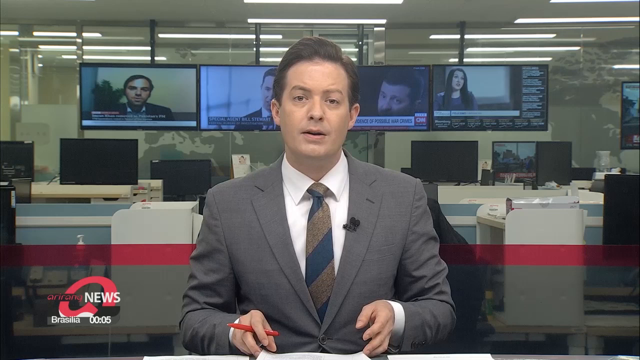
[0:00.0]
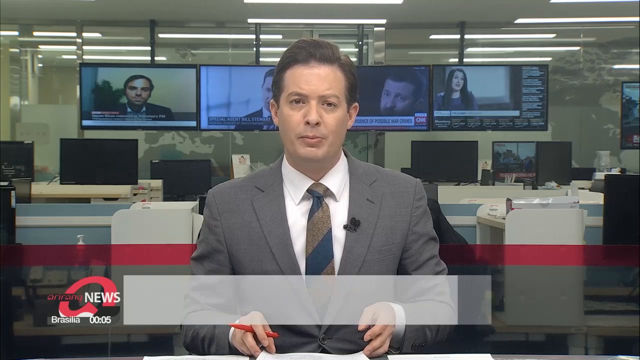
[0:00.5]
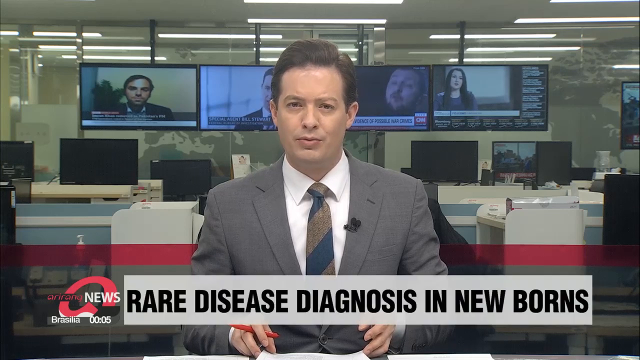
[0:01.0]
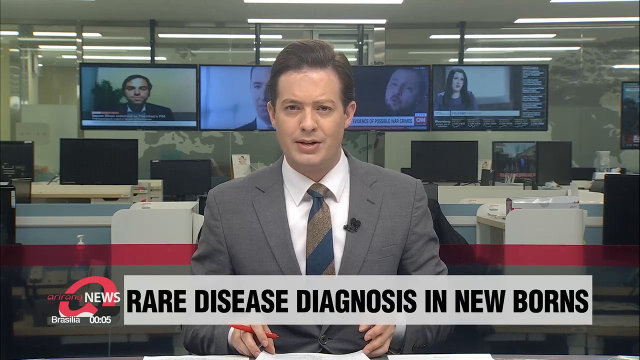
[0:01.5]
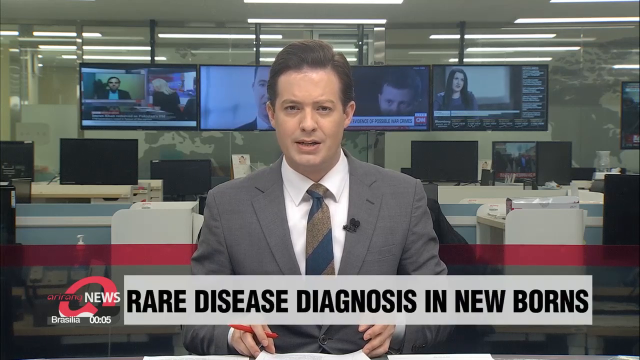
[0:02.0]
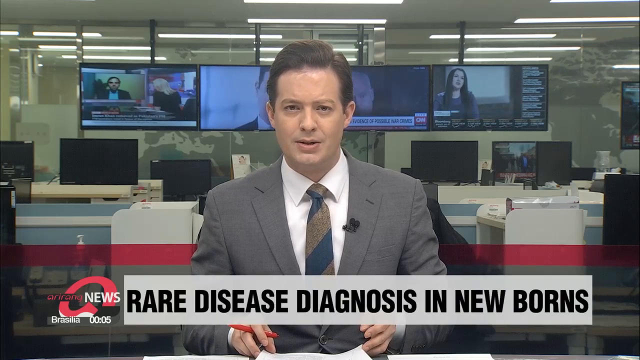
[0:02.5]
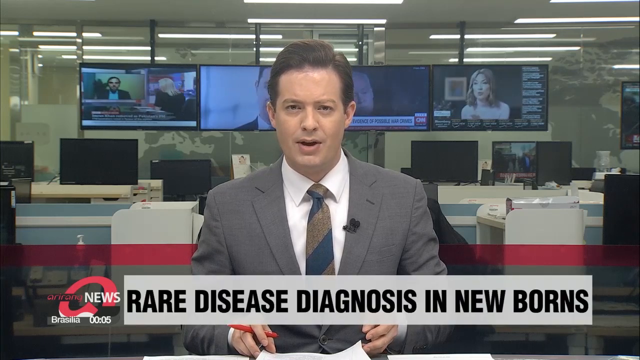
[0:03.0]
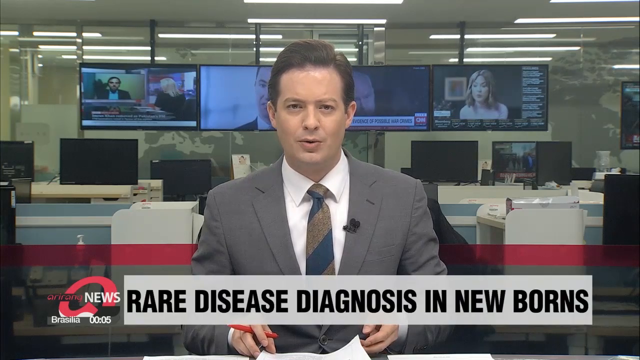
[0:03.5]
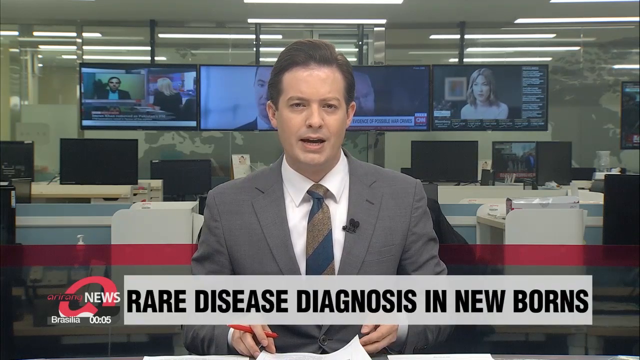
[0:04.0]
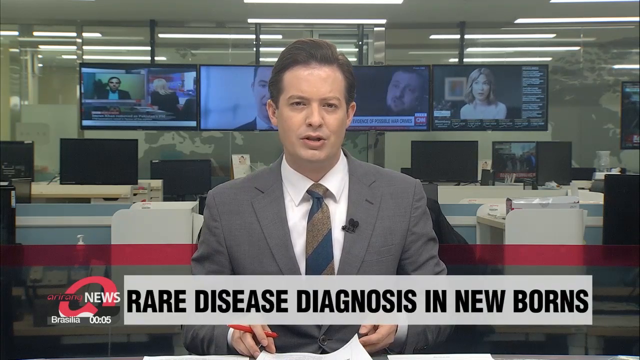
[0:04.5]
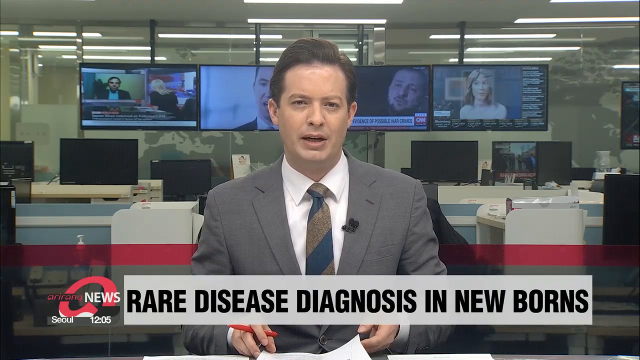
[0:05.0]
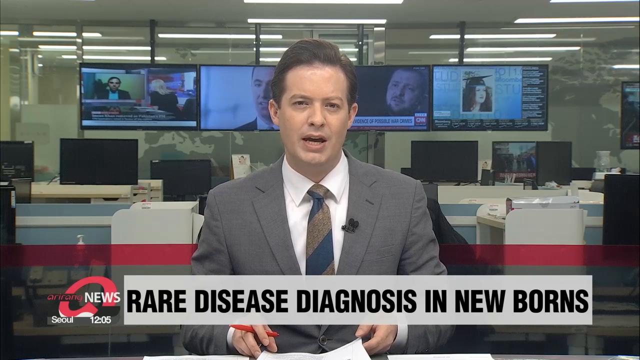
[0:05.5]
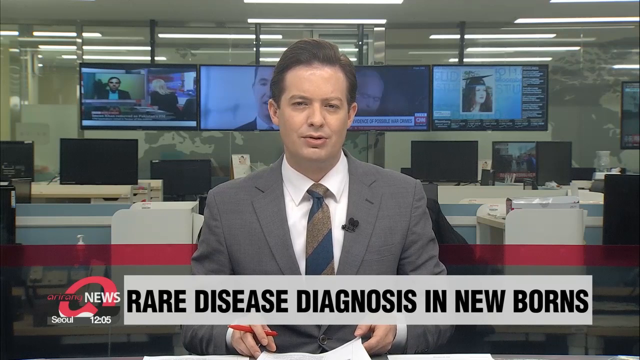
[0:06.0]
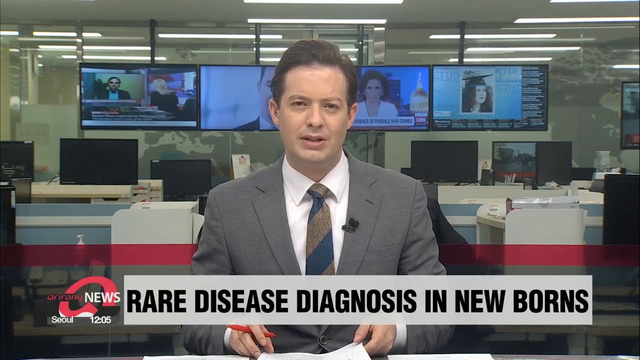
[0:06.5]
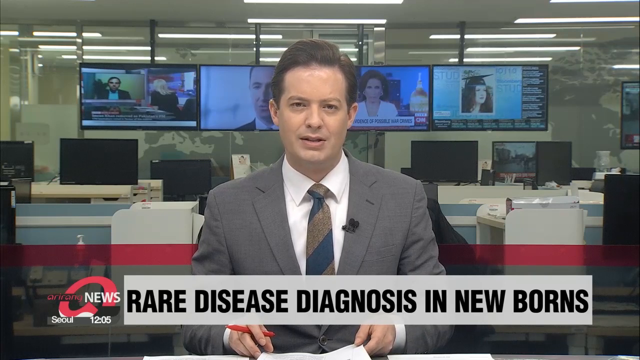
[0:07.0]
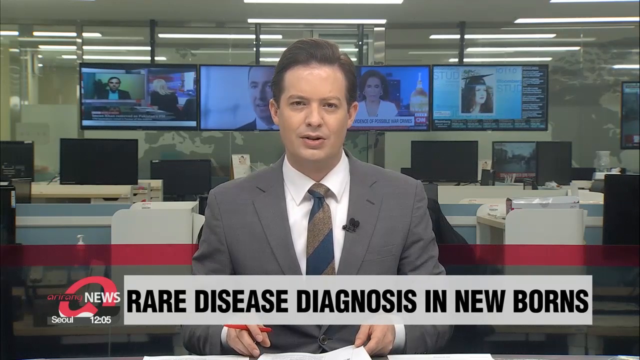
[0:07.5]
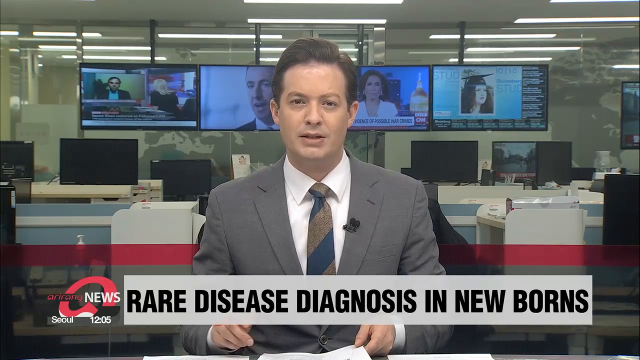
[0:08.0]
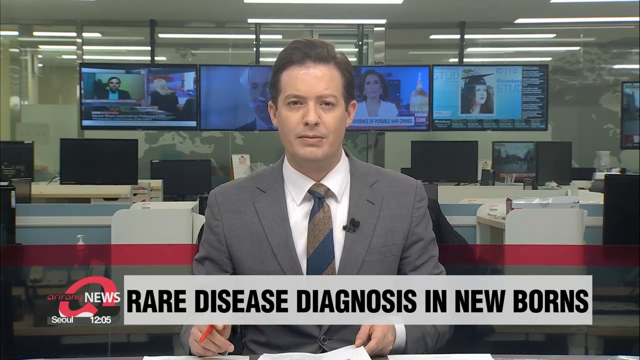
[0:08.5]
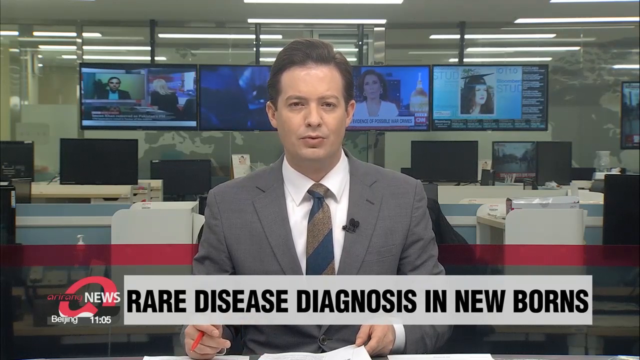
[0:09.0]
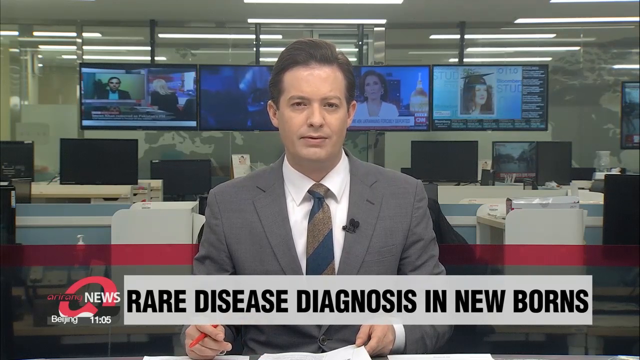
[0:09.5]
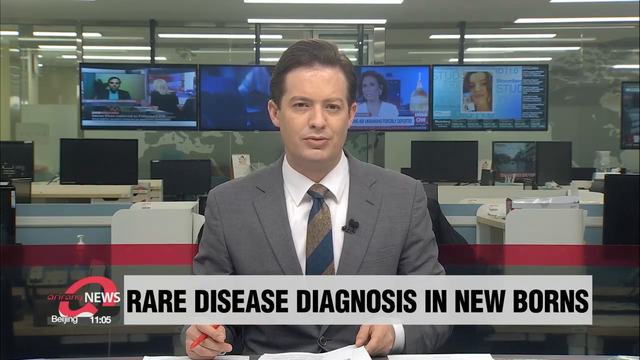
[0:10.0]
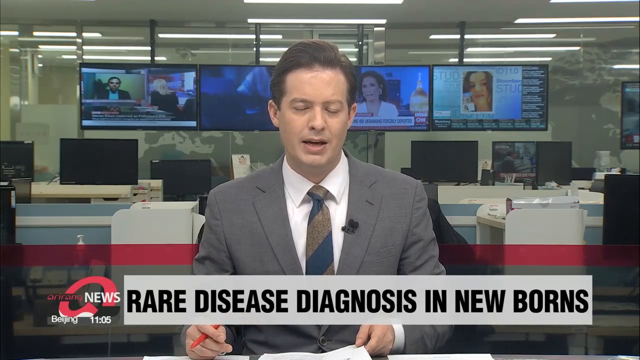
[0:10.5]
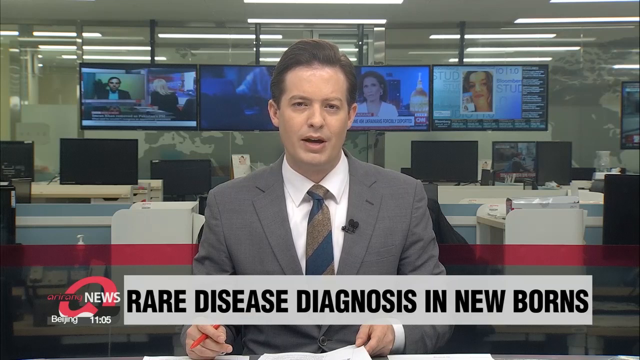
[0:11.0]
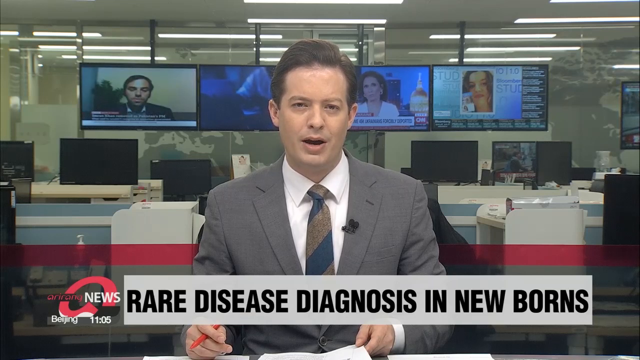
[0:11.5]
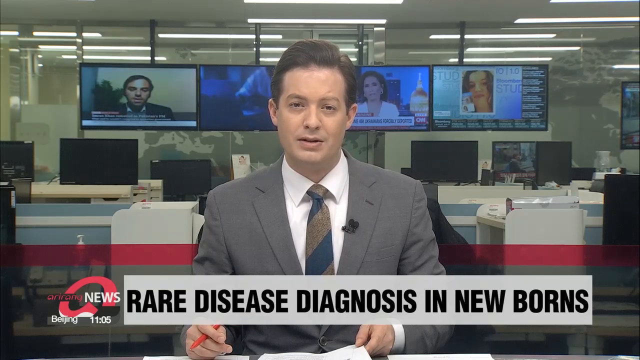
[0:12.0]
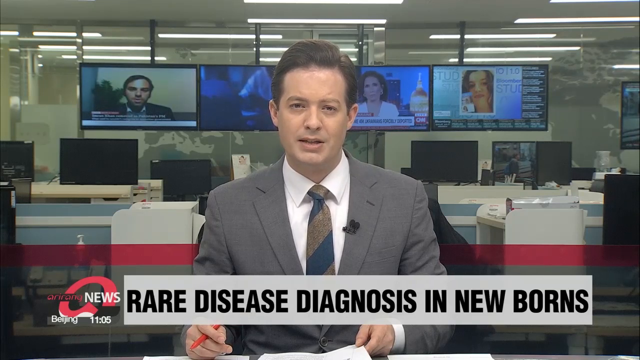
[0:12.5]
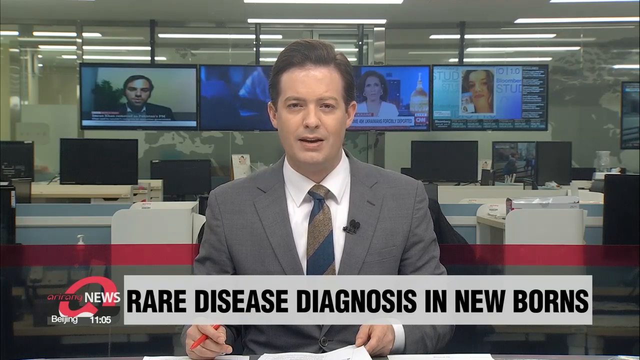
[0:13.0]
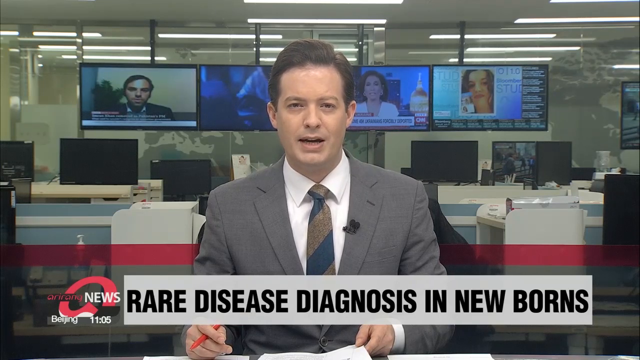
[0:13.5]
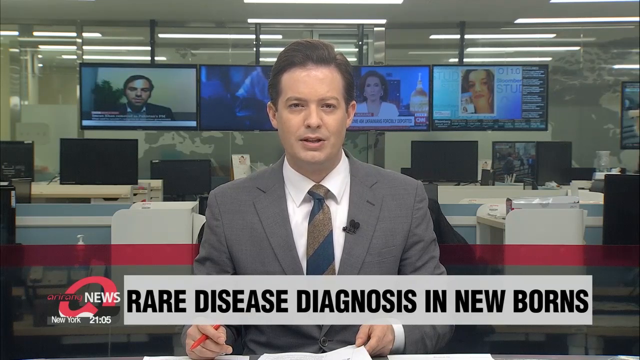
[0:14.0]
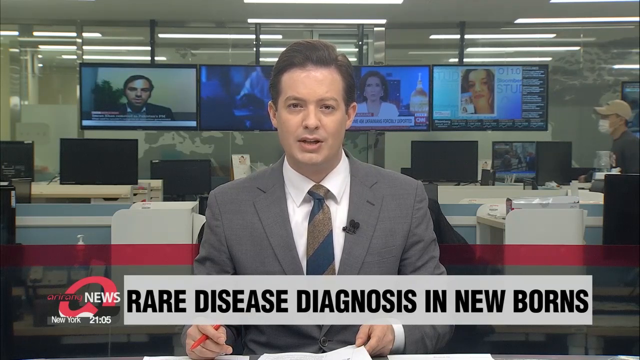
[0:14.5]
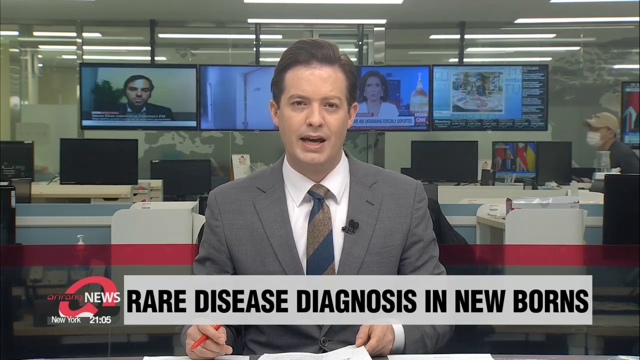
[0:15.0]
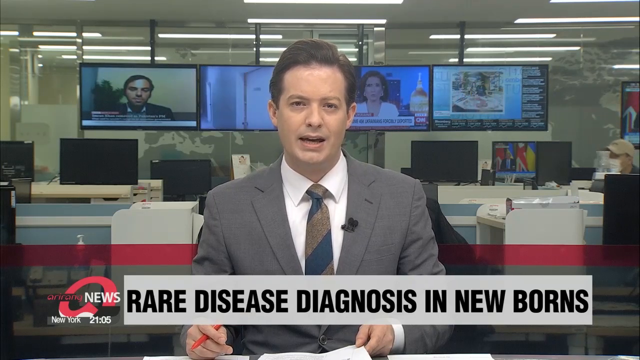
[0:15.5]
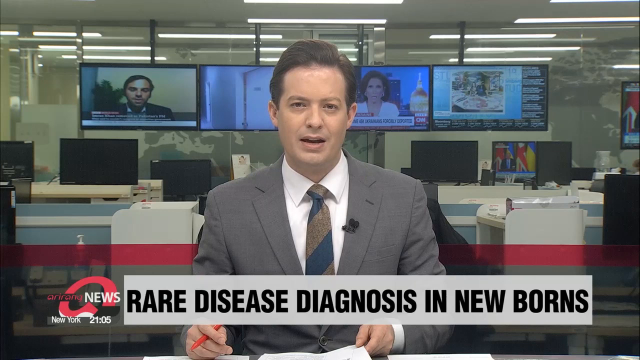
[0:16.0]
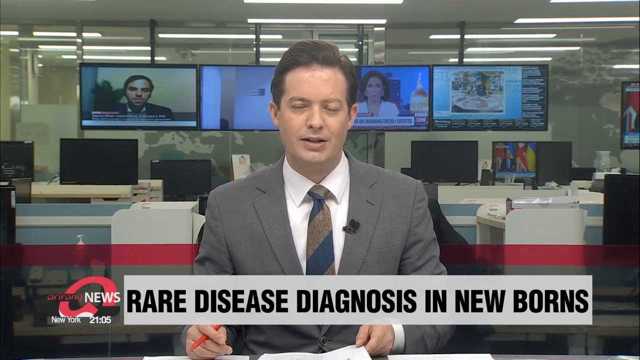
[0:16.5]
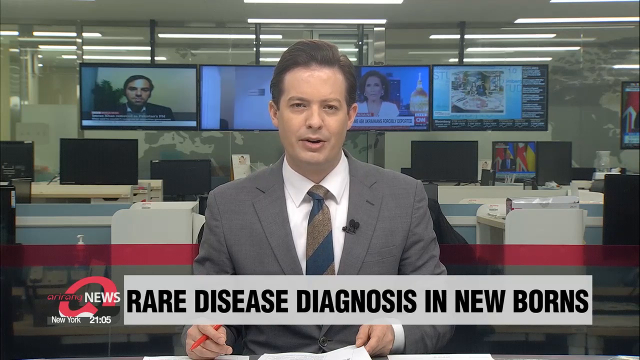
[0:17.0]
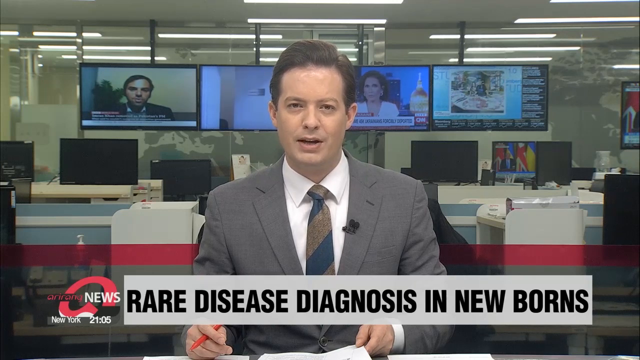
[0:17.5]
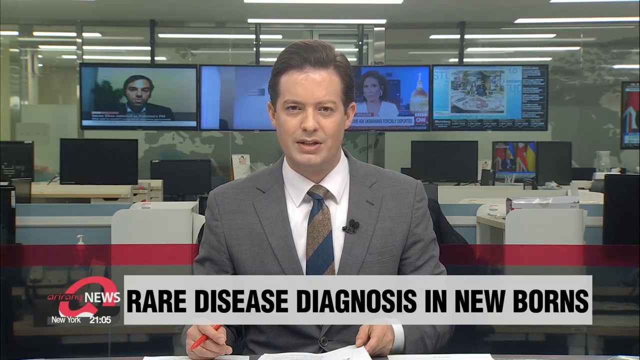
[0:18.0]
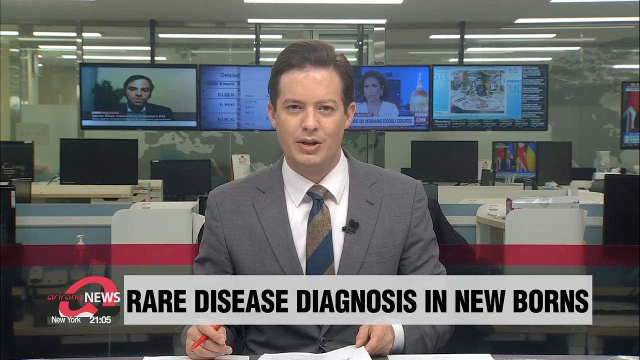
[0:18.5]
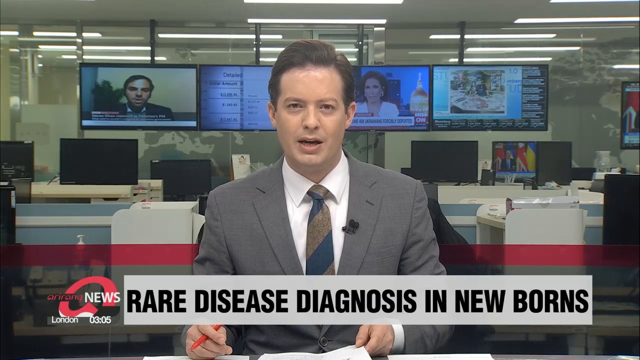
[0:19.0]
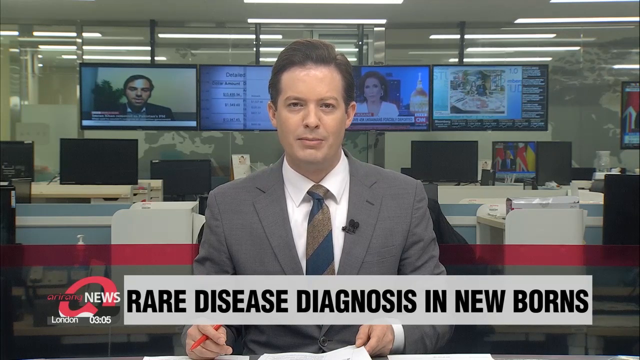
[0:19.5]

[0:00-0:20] A news report from Arirang News, Brasilia, opens with an artistic-looking A logo behind it. A reporter, a middle-aged man with brown hair in a gray suit and a blue and golden or bronze striped tie, sits at a desk. Behind him appears to be a glass wall, with a red stripe across its bottom, and beyond it several large screens hang from the ceiling above desks with many computer monitors. As he talks, the crawler appears: "rare disease diagnosis in newborns." Each of the screens behind him displays something different. He holds a few sheets of paper and a pen while talking and looking at the camera. There is a slight reflection in the glass wall, but it does not obstruct the view. An employee wearing a mask goes and sits down, but most of the desks in the background are empty, with nobody sitting at them.